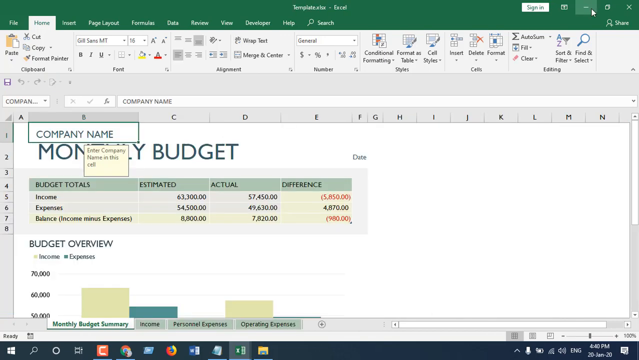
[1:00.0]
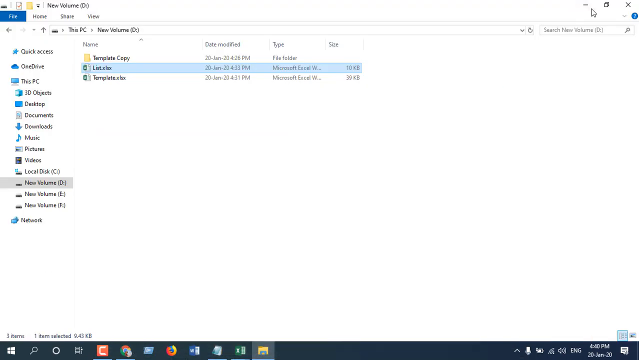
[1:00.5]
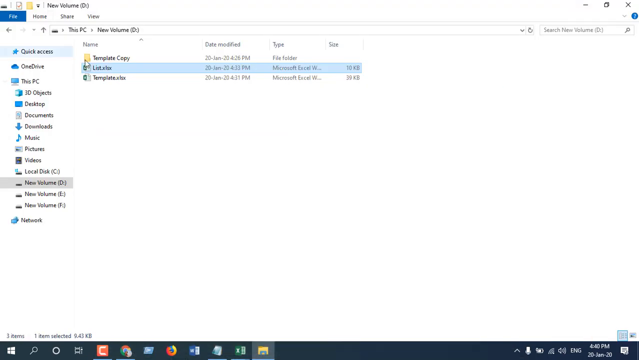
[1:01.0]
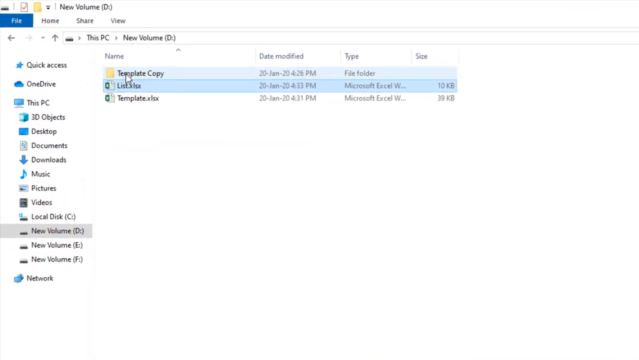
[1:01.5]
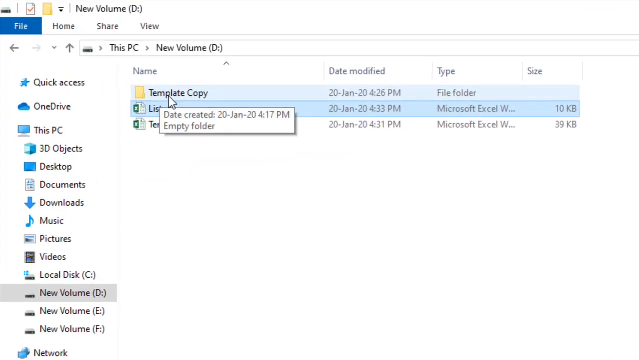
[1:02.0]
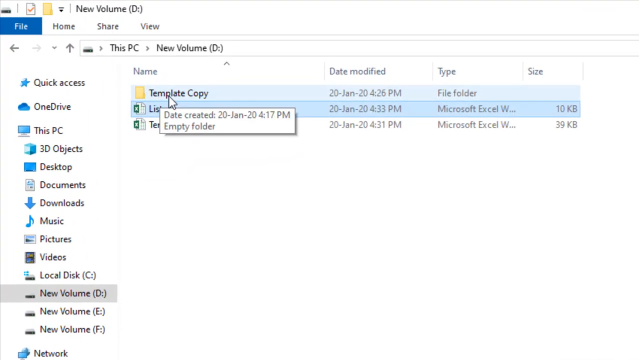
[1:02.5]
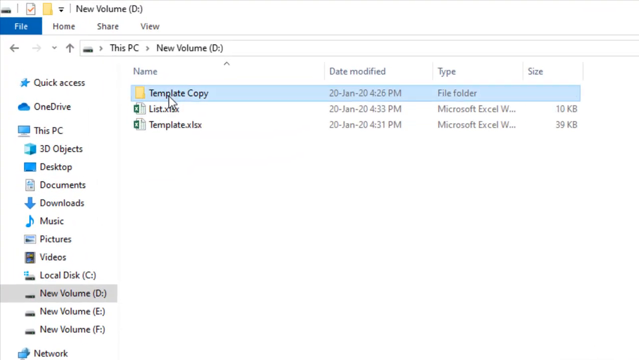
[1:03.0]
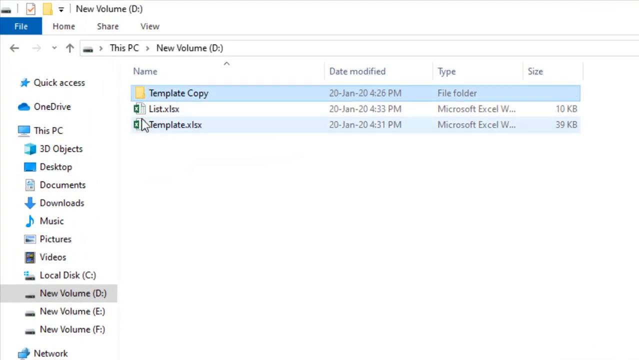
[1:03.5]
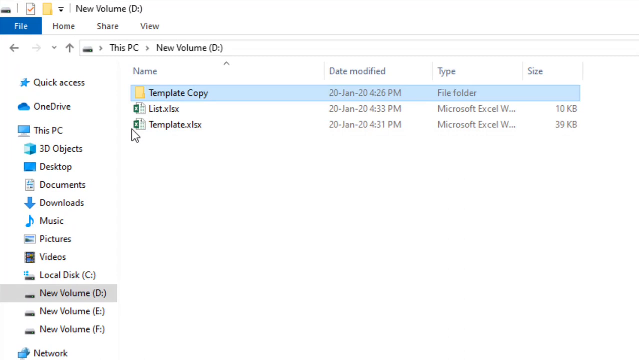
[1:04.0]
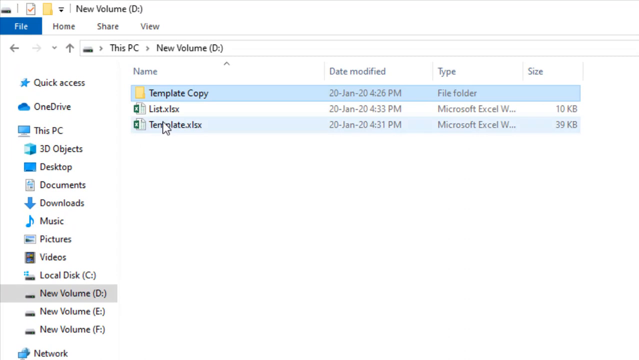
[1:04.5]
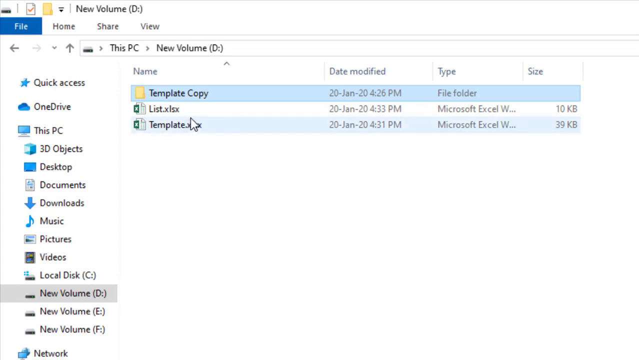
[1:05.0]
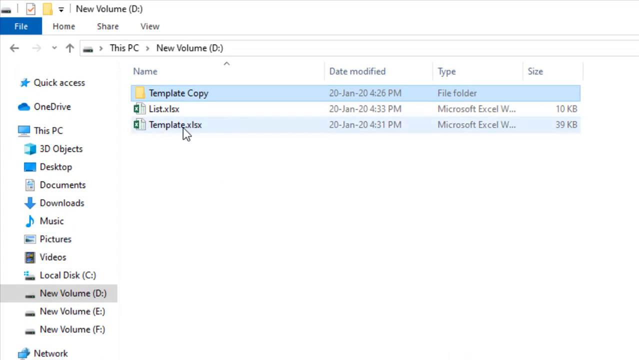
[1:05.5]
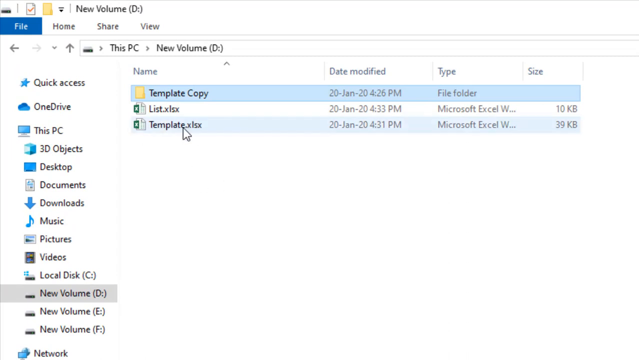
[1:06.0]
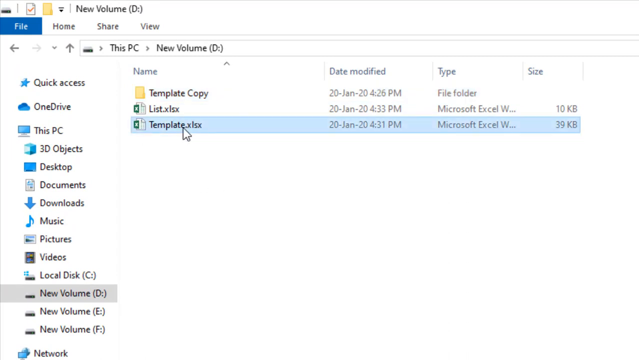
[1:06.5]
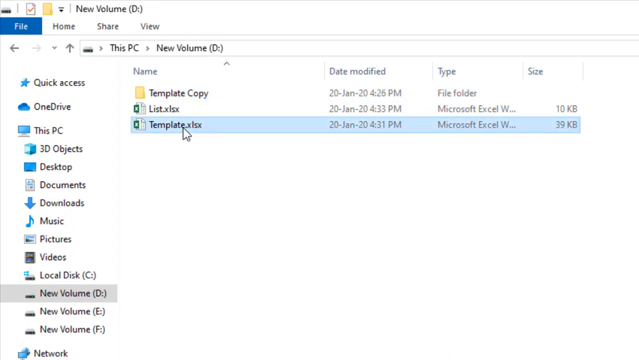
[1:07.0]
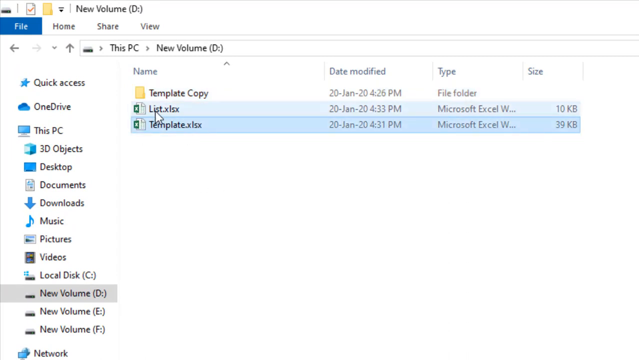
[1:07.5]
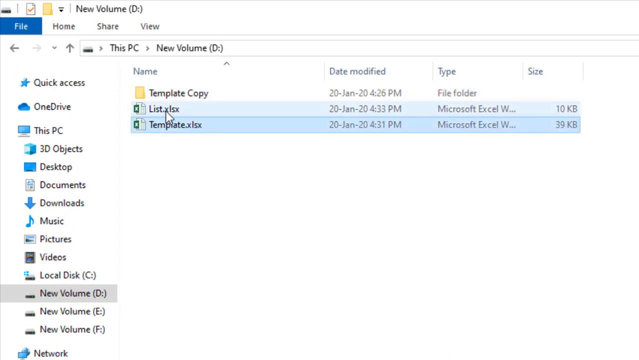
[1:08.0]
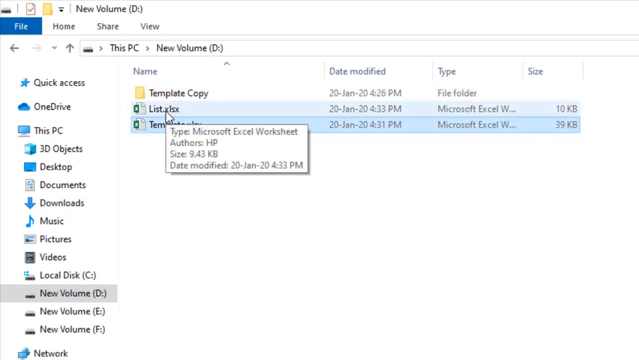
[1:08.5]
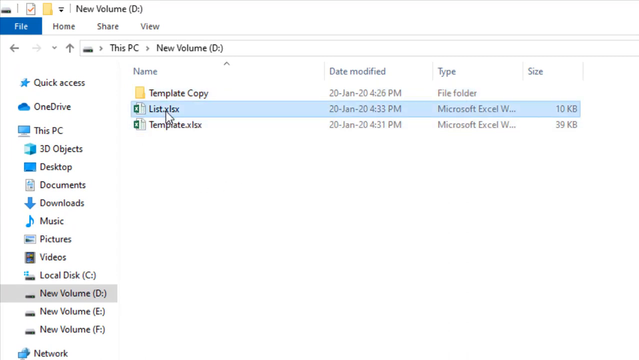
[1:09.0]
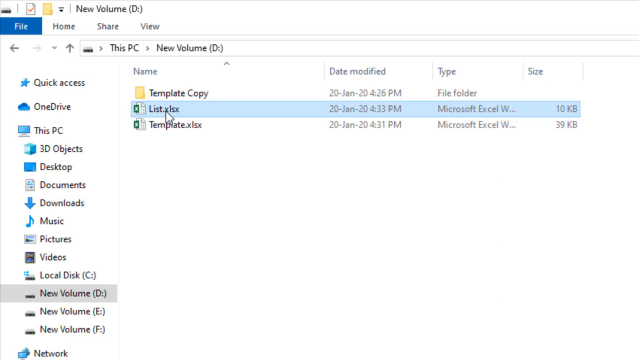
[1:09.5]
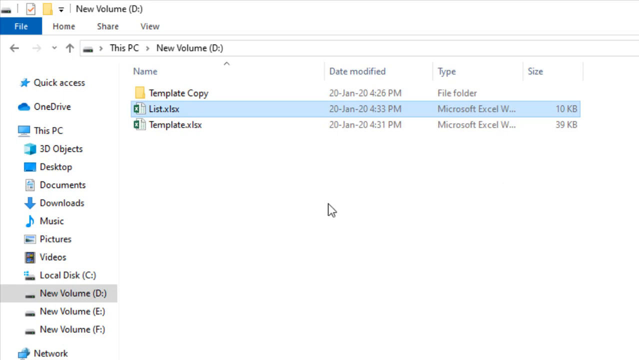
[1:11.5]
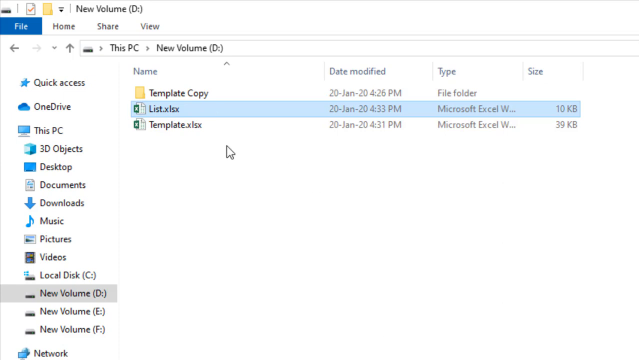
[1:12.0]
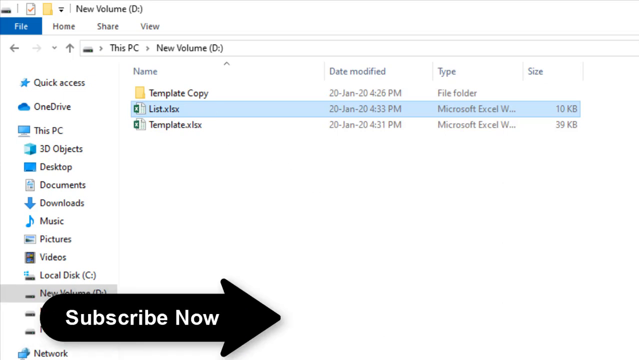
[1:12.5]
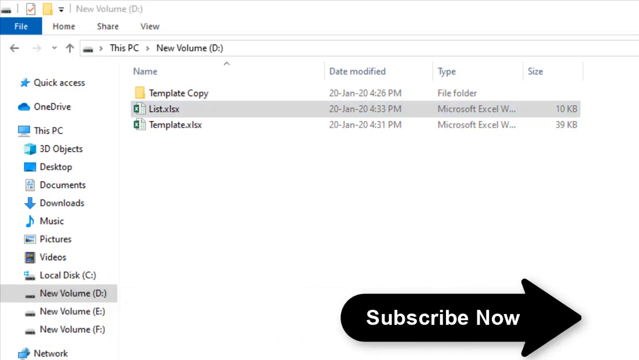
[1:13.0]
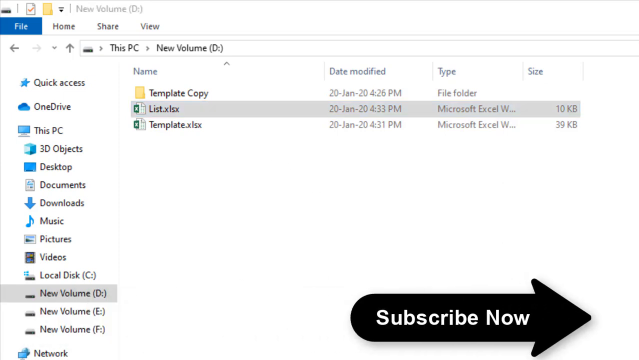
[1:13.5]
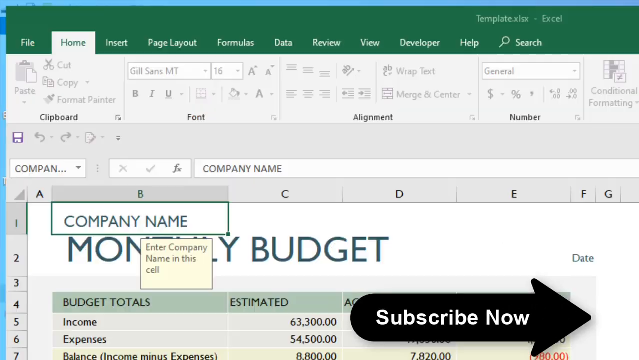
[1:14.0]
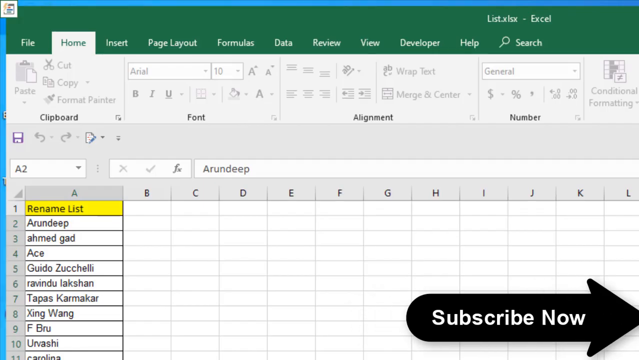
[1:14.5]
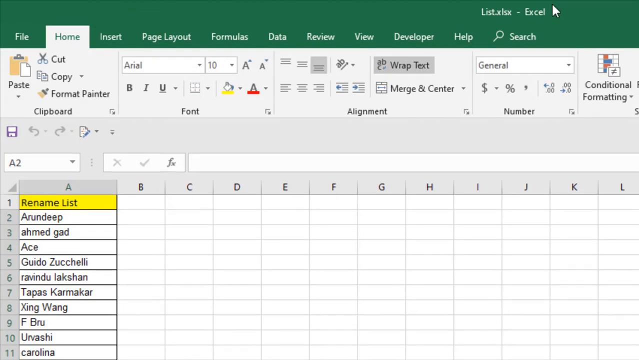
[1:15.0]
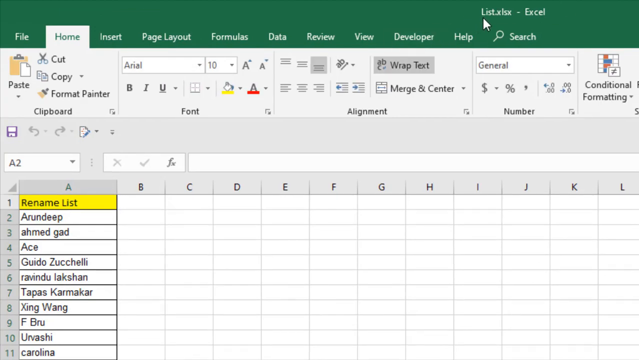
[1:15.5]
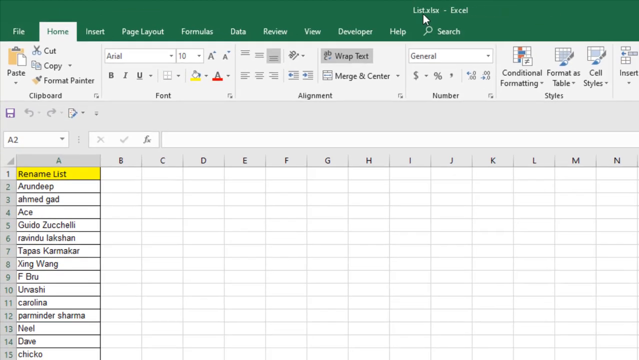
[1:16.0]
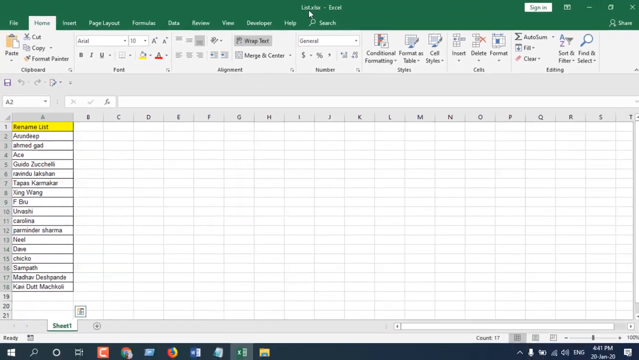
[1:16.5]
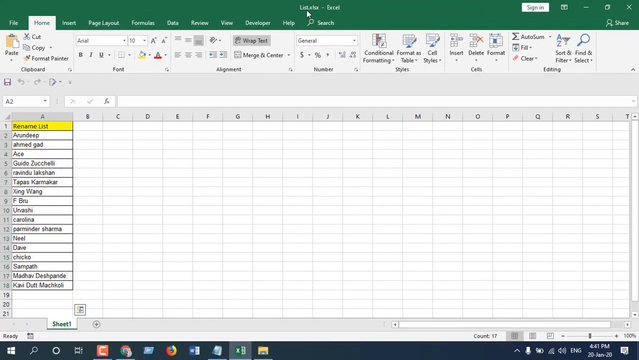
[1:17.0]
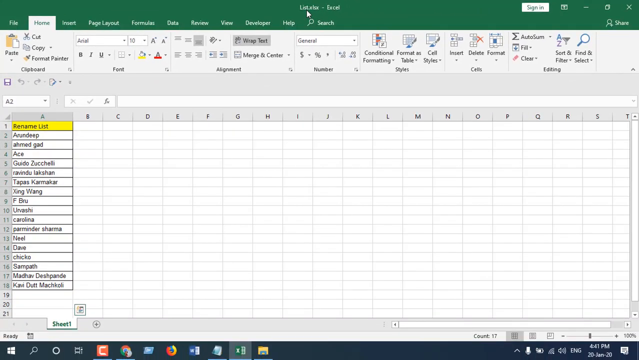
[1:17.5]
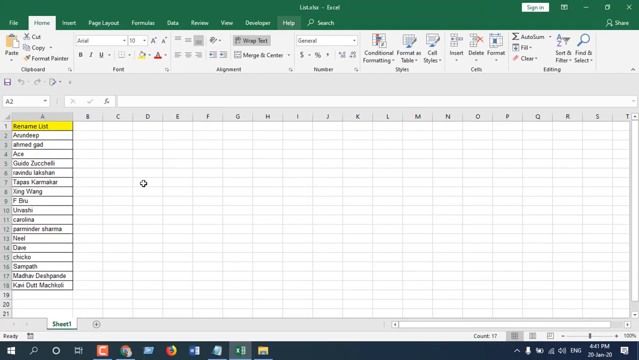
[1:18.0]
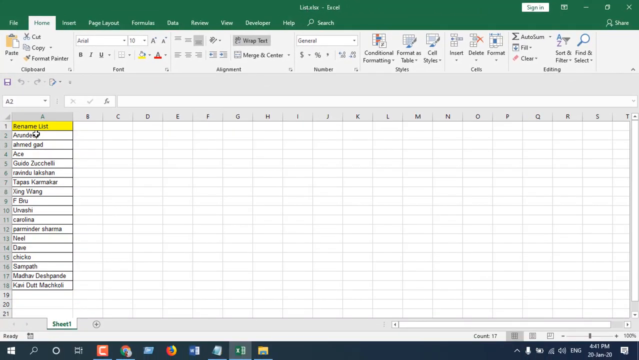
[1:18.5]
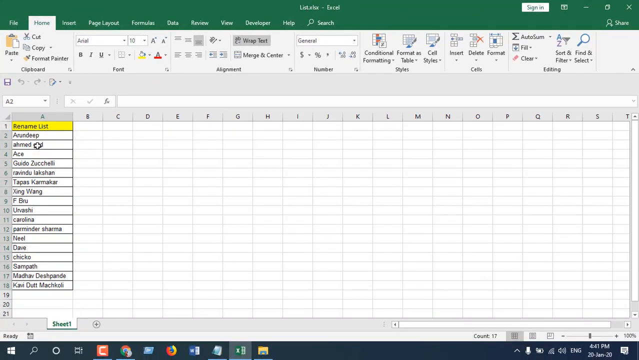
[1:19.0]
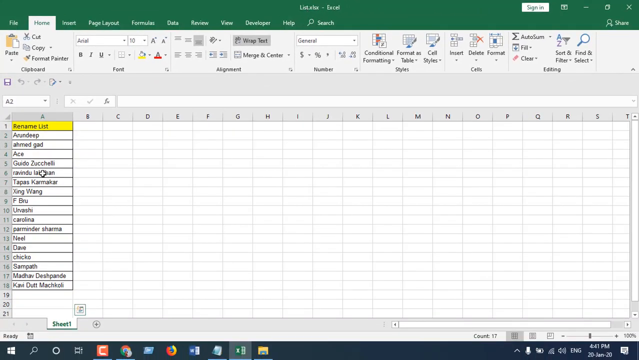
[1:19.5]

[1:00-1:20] The cursor moves back and forth. Template copy is highlighted in blue; the cursor then hovers over and selects template, and then selects the list Excel file above it. An animation appears in the bottom right corner: a black arrow pointing right with white text reading "subscribe now". The view returns to the list, which has 18 rows. Below F. Brew, row 11 is Carolina, row 12 is Perinder Sharar, row 13 is Neil, row 14 is Dave, row 15 is Chico, row 16 is Sempath, row 17 is Machar Deshpande, and row 18 is Kavidute Machkali. All the other rows are highlighted, then the view goes back to the template Excel sheet and it is minimized.